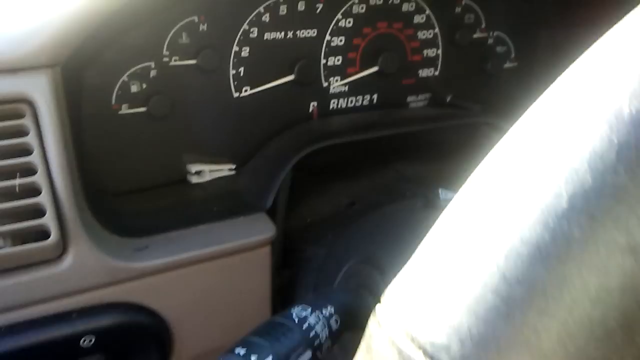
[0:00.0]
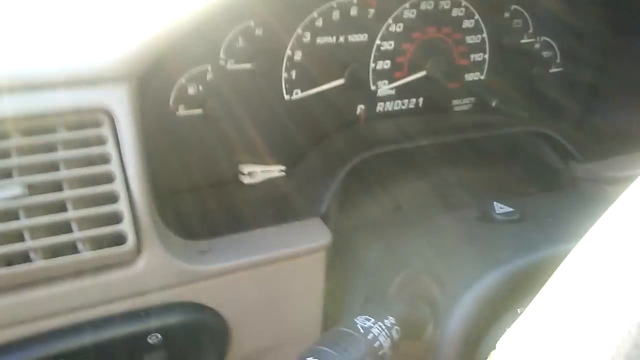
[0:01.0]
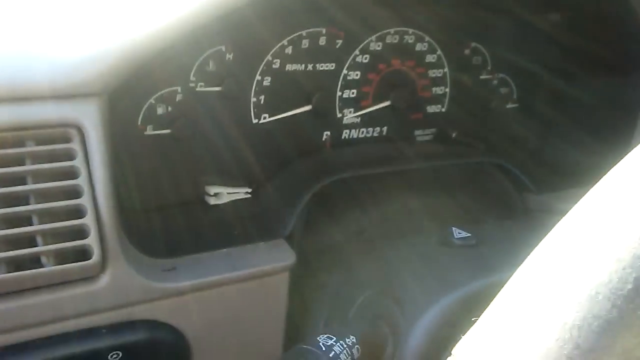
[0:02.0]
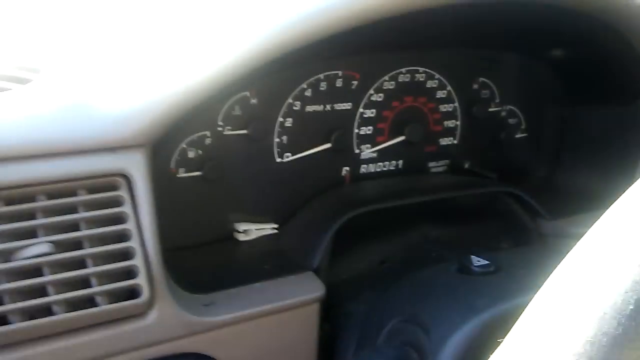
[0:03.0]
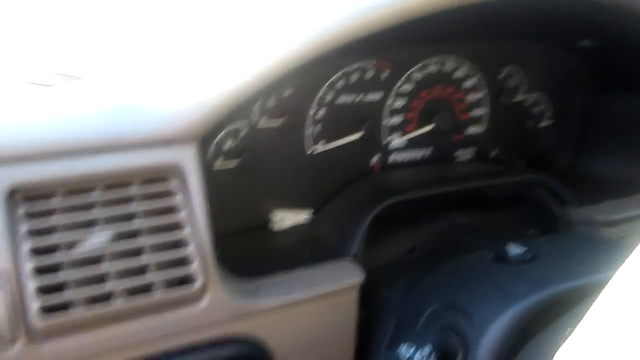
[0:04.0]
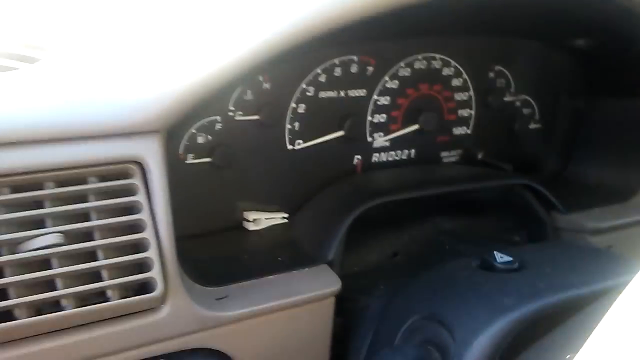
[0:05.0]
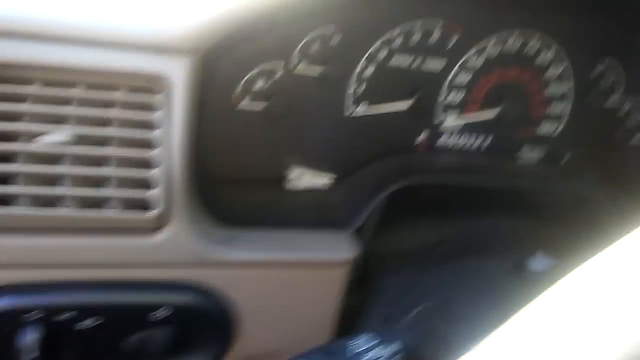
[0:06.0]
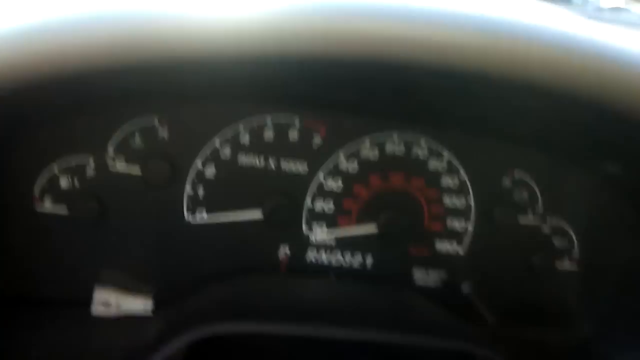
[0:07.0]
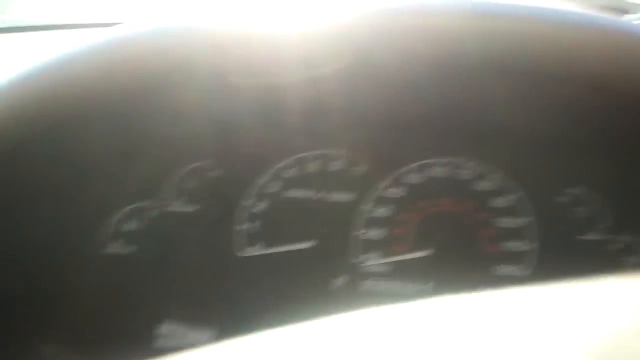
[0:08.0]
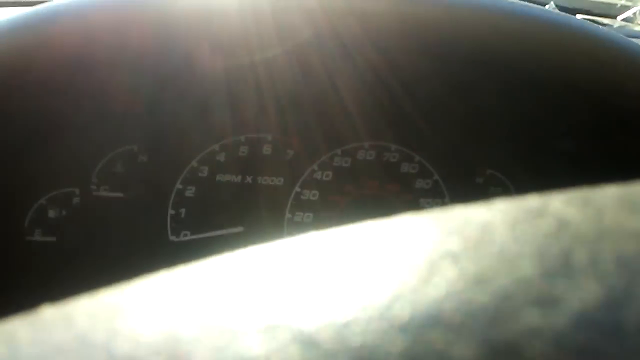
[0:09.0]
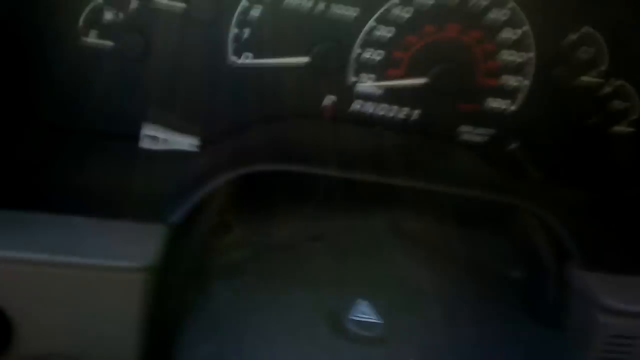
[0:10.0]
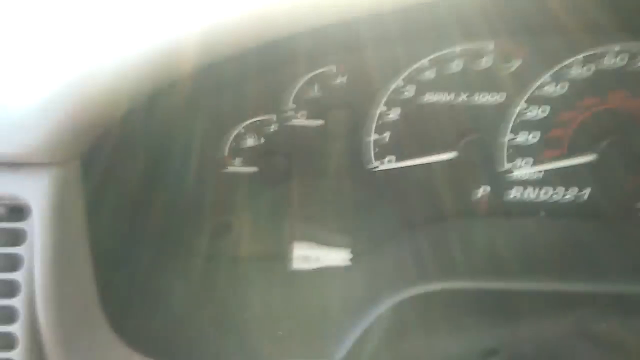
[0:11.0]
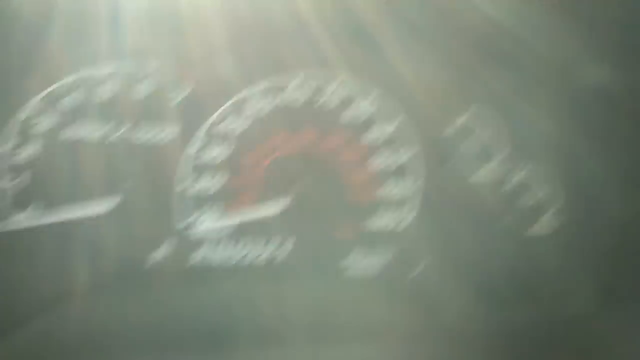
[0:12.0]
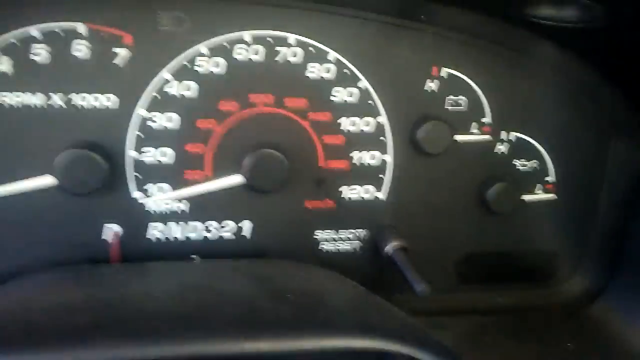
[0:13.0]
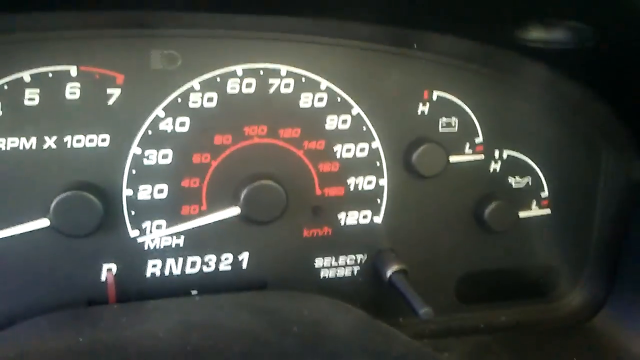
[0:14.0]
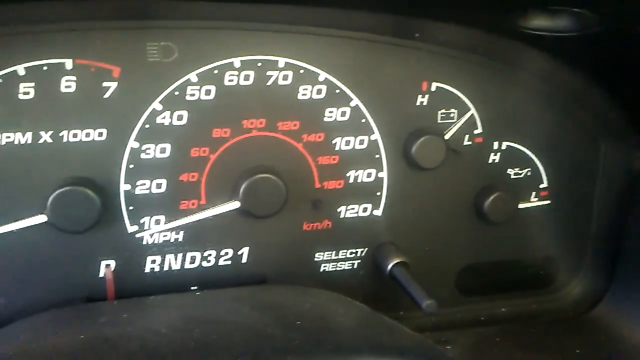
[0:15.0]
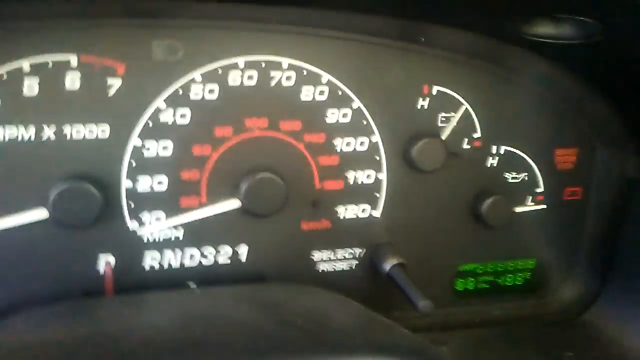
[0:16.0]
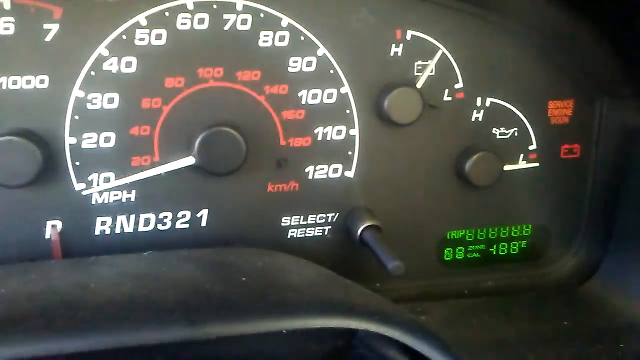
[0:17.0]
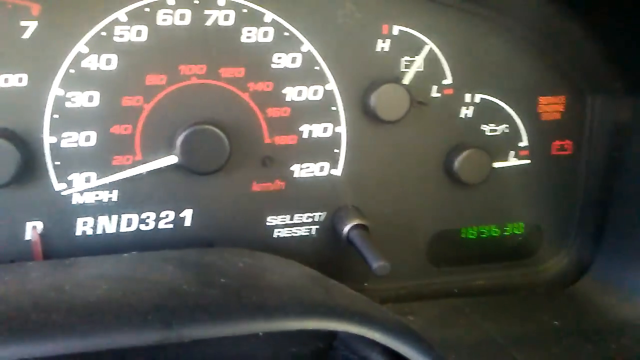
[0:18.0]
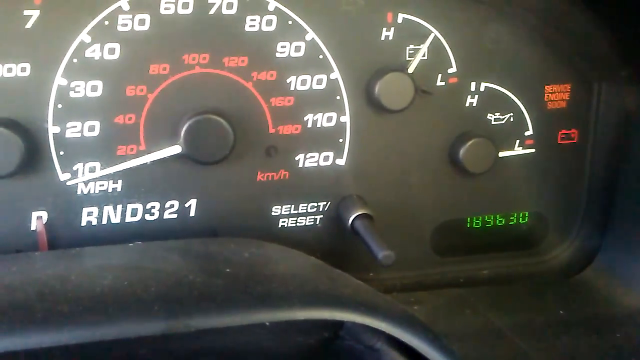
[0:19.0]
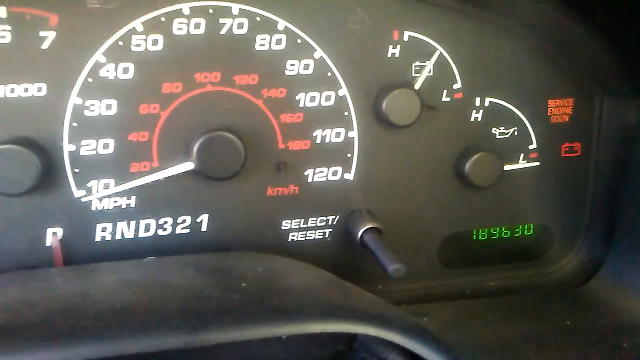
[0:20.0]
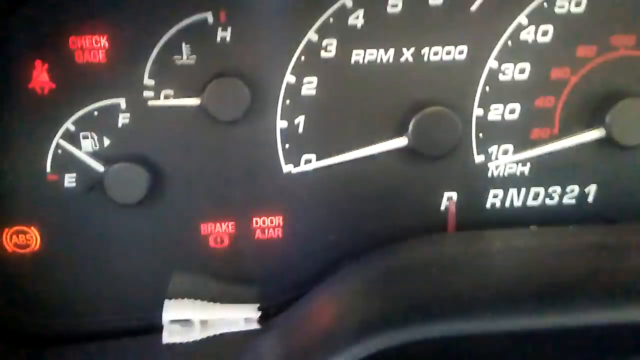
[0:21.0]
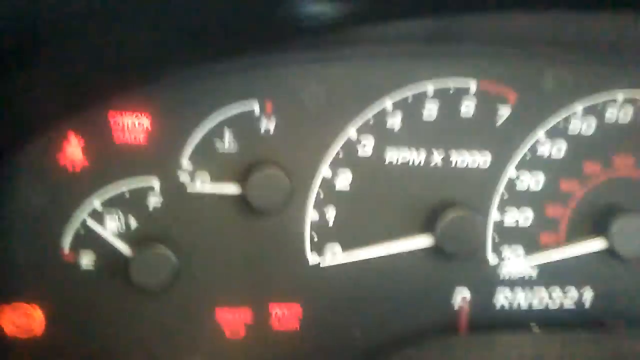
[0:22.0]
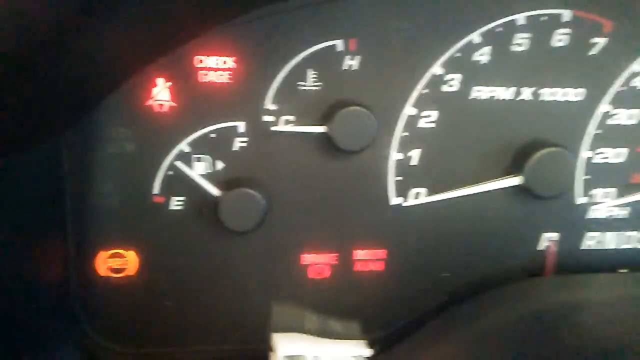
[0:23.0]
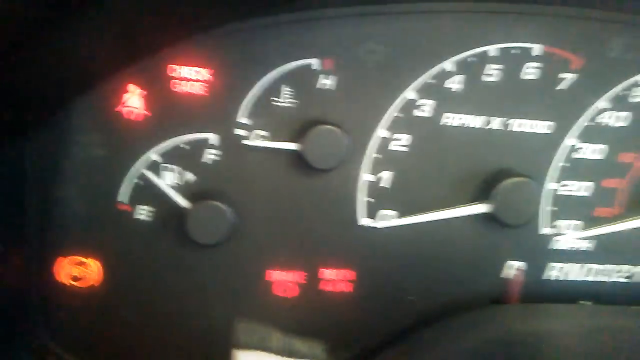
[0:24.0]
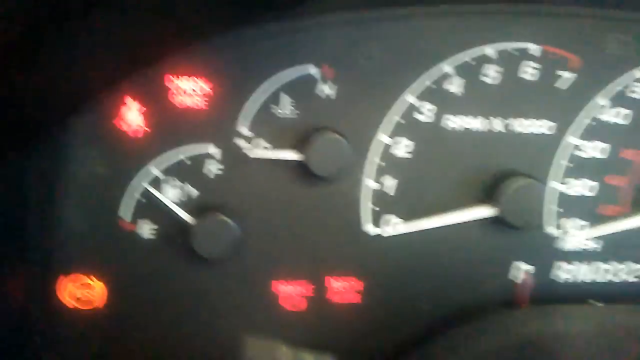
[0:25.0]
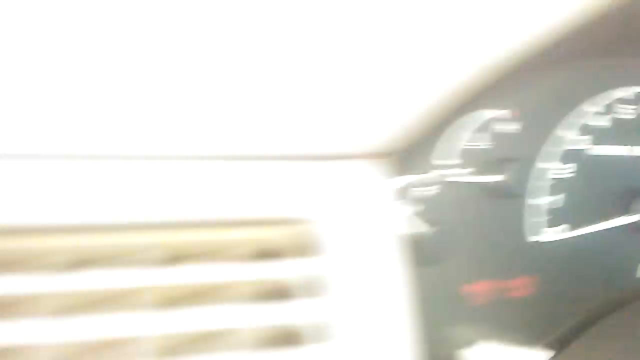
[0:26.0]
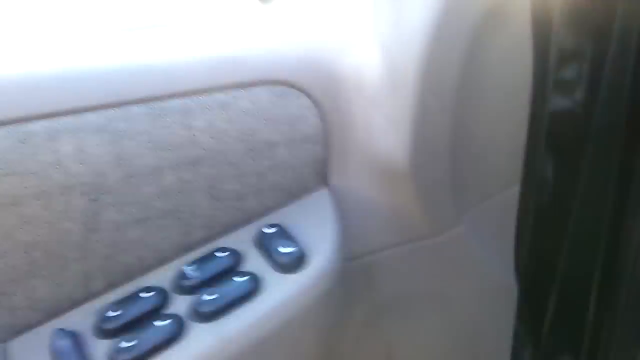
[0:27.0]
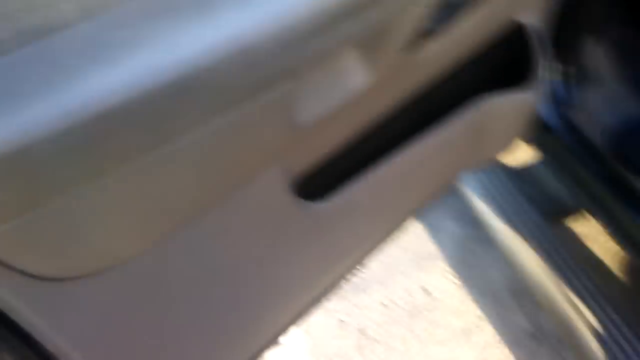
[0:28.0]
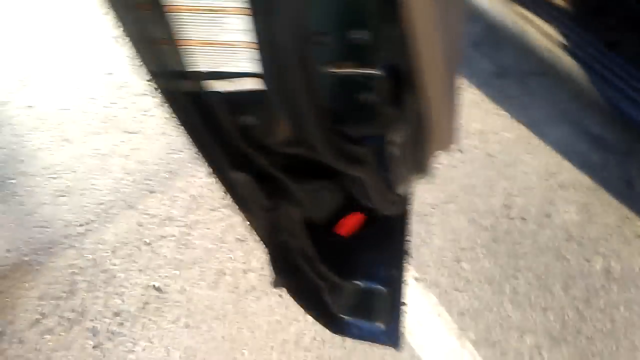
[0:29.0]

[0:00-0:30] The view shows the speedometer and other gauges of a car, with the top part of the steering wheel also visible. The camera is slightly shaky and unsteady. Sun rays come in through the windshield. The focus is on the speedometer, which rests on zero, and all the other gauges are also on zero. The camera zooms in close on the speedometer, showing markings from 1 to 120 in red and white arranged in a semicircle; the gauge needles are white. Two red lights then pop up on the right side: the battery light and an engine light. What looks like an odometer appears in green LED to the lower right, reading 1896.30. Other lights come on as well, including the seatbelt light to the upper left and three other lights; it looks like the car is being started. The fuel gauge needle shifts to just a bit above the quarter mark, and the lights above the fuel gauge say "check gauge". The camera moves out of the car to show the lower corner of the driver's side door and the ground.